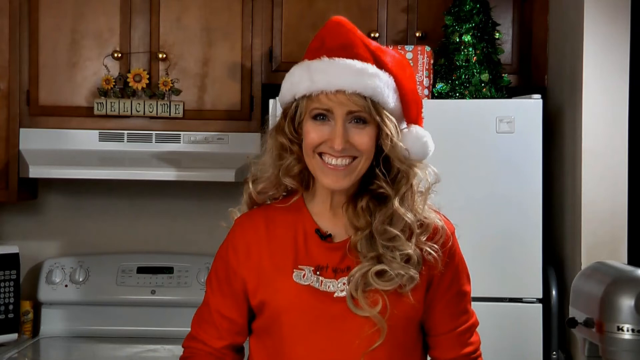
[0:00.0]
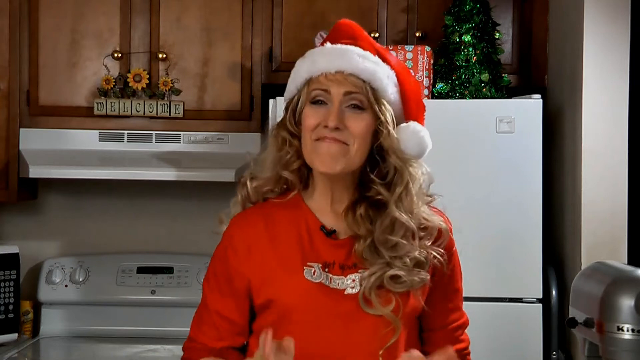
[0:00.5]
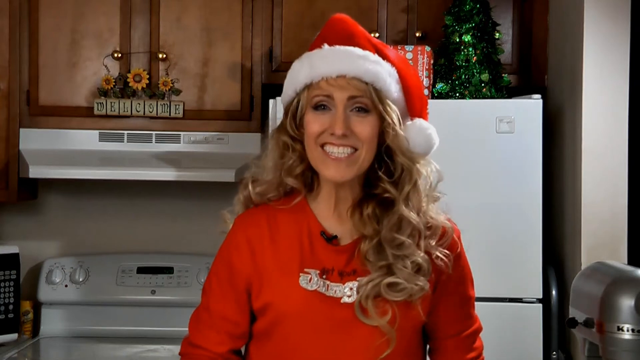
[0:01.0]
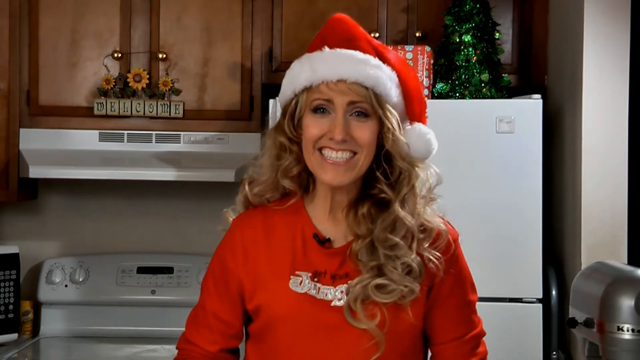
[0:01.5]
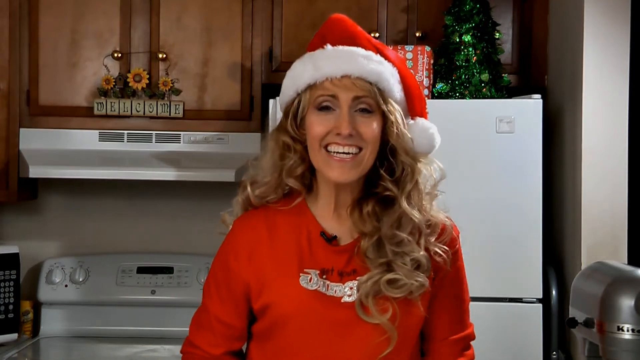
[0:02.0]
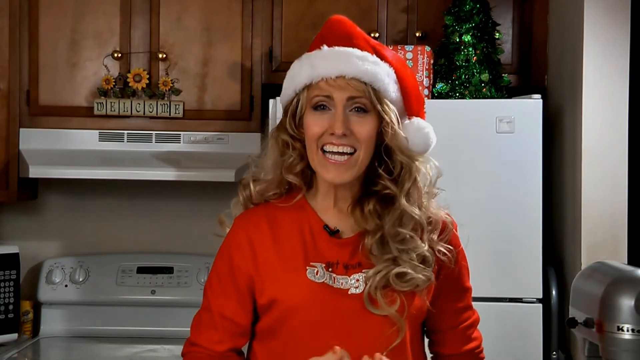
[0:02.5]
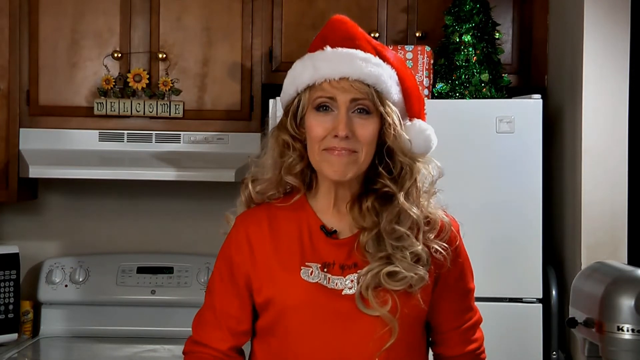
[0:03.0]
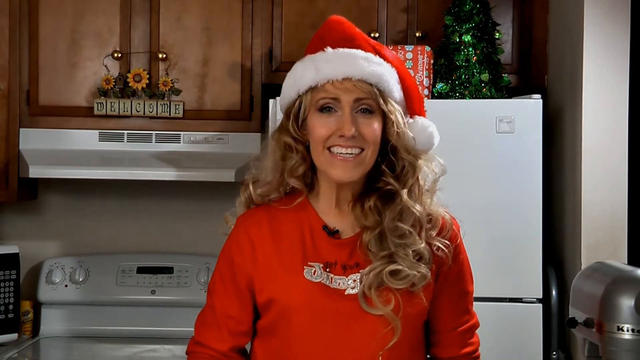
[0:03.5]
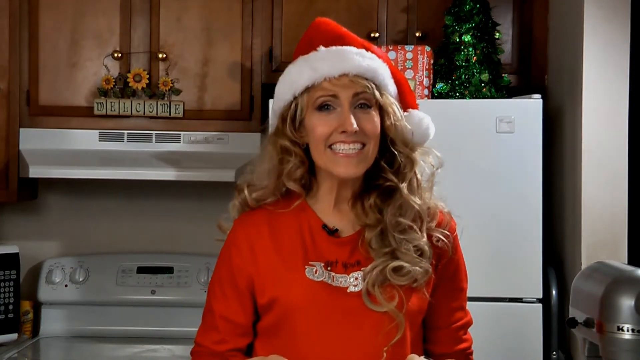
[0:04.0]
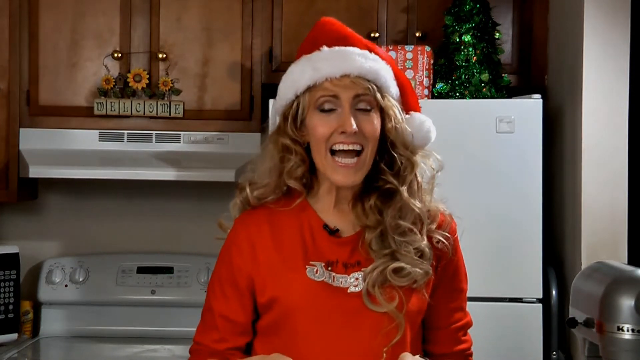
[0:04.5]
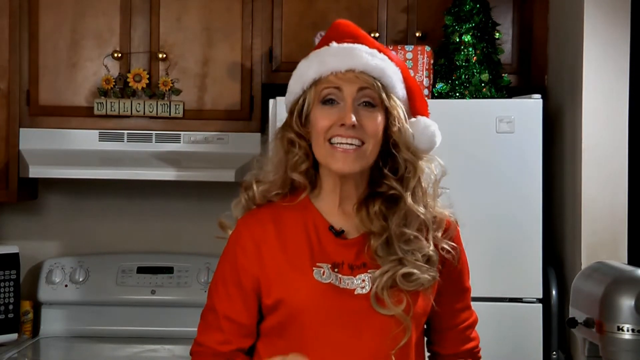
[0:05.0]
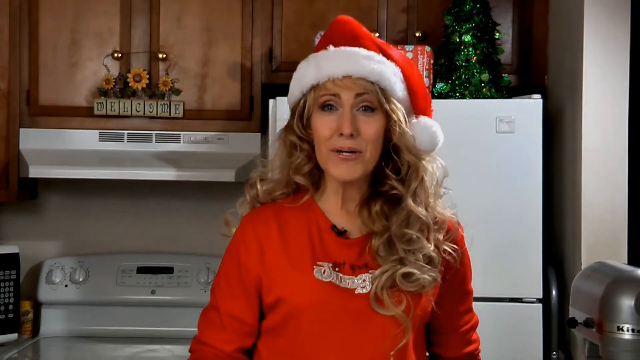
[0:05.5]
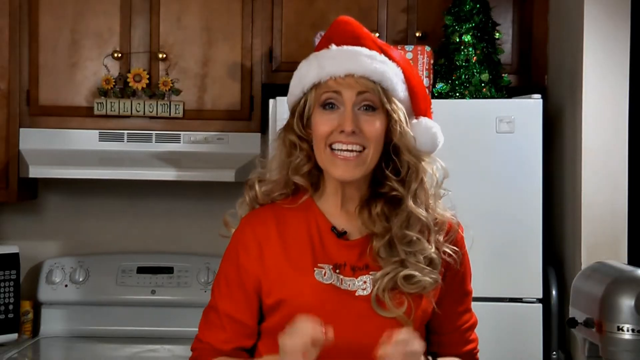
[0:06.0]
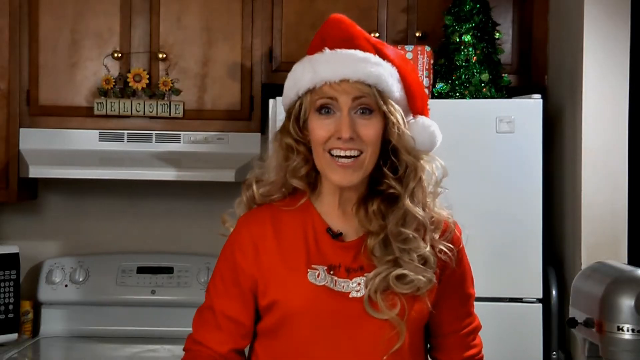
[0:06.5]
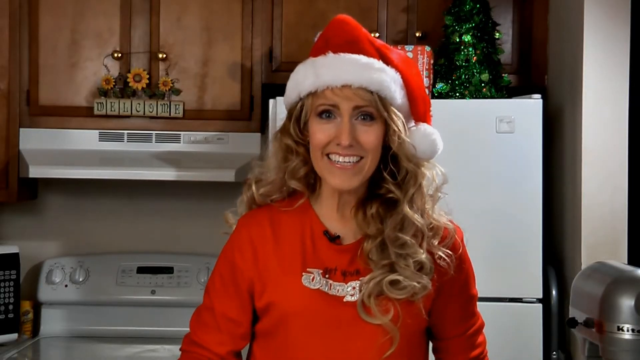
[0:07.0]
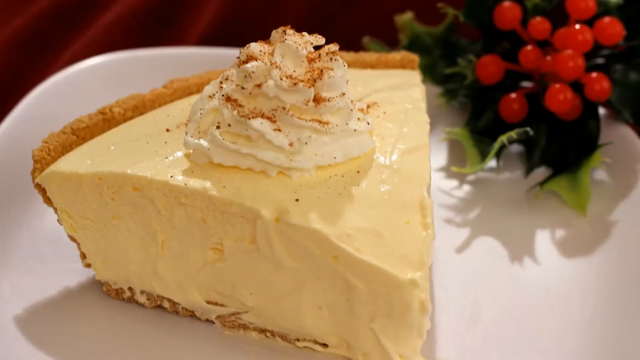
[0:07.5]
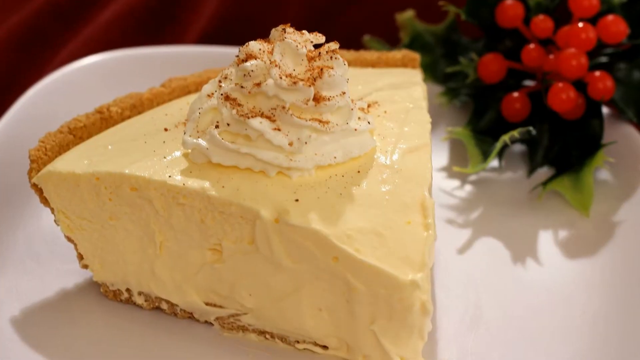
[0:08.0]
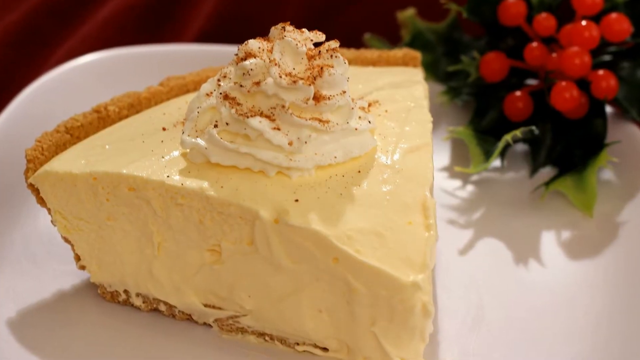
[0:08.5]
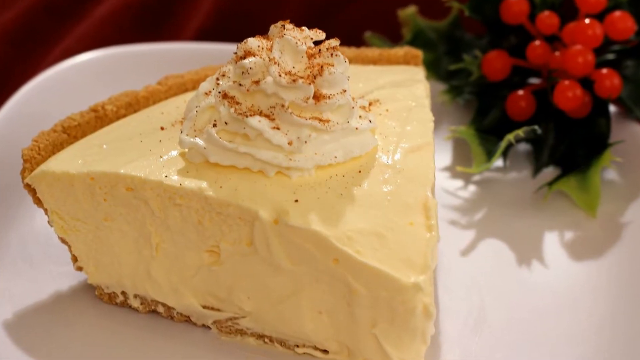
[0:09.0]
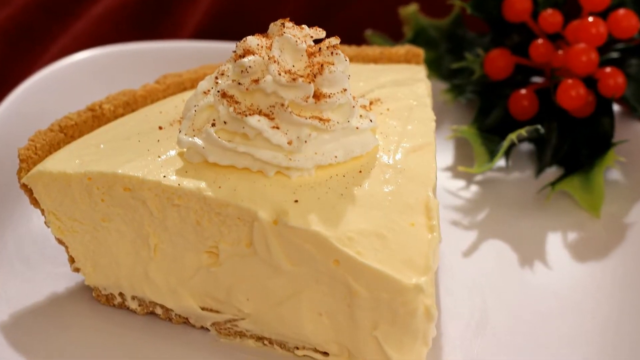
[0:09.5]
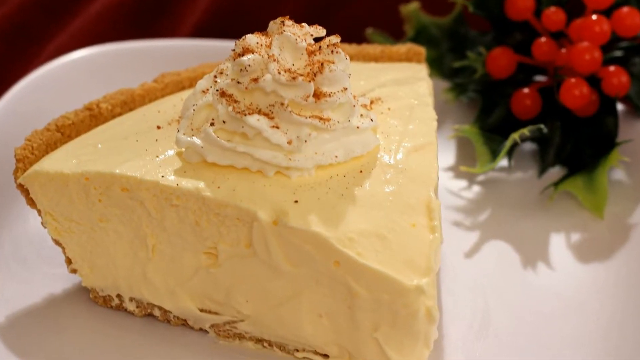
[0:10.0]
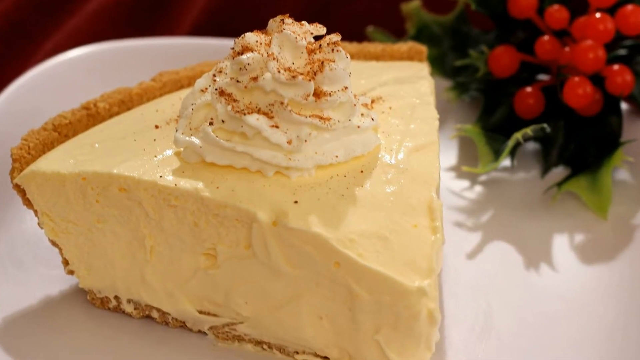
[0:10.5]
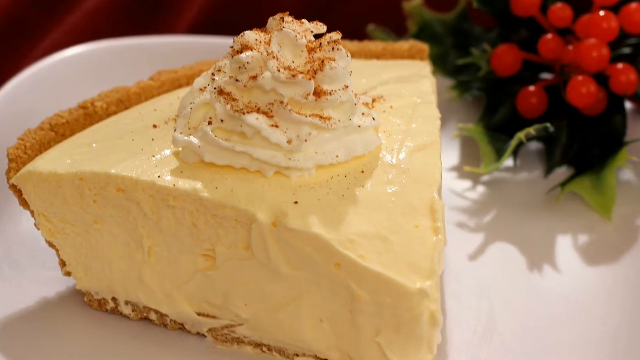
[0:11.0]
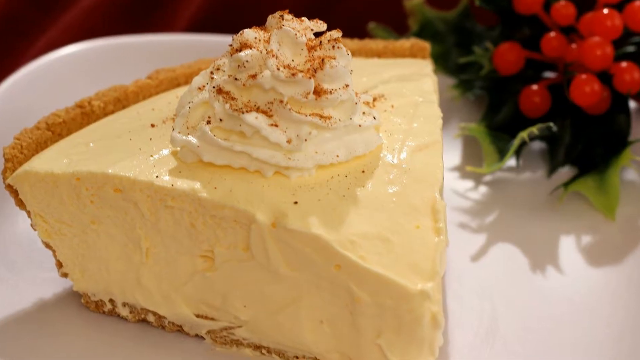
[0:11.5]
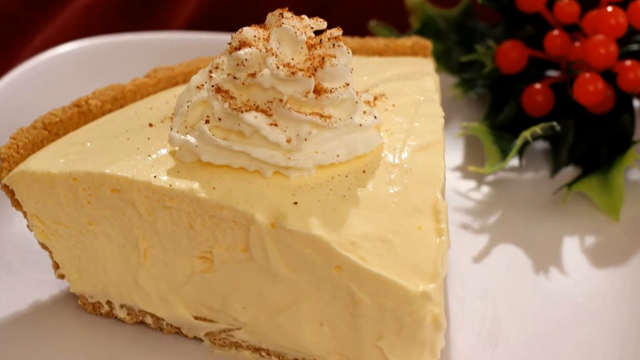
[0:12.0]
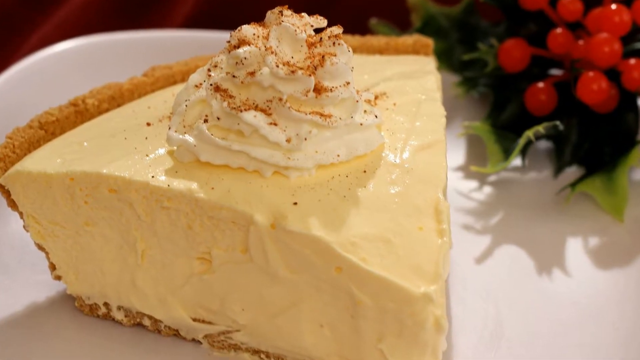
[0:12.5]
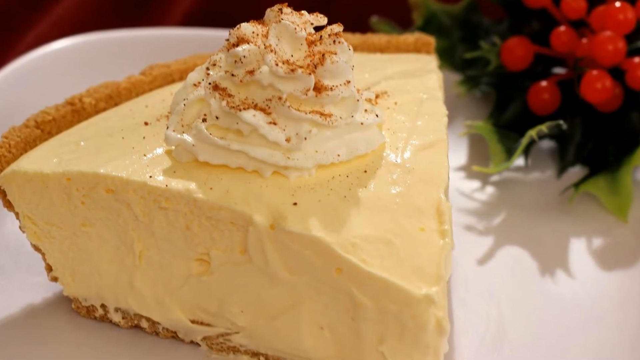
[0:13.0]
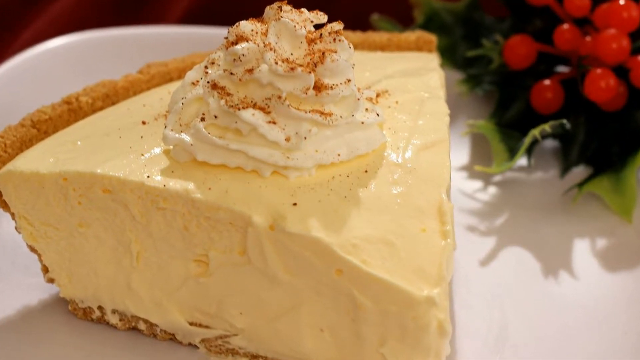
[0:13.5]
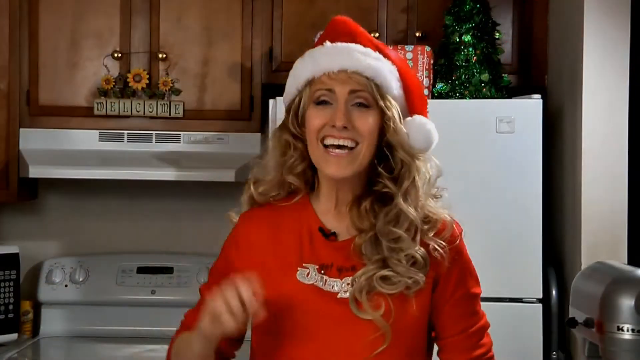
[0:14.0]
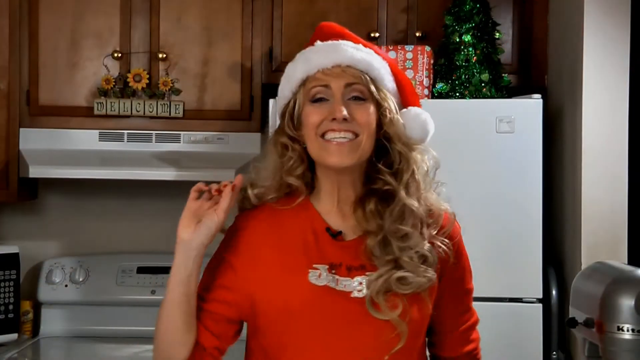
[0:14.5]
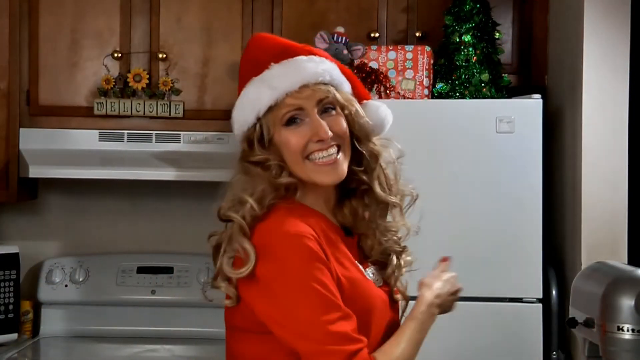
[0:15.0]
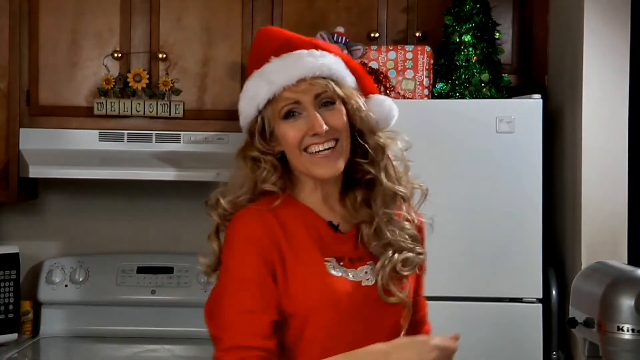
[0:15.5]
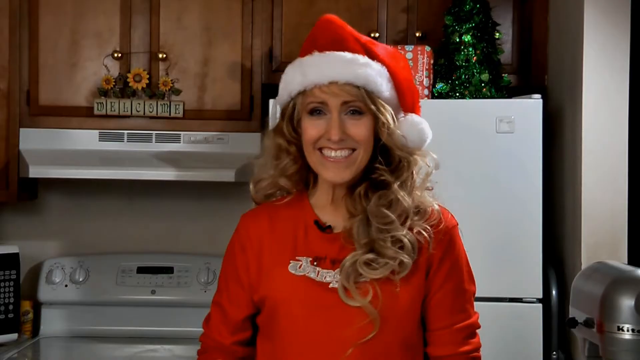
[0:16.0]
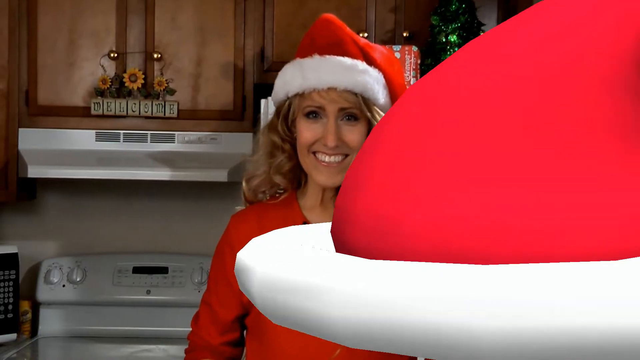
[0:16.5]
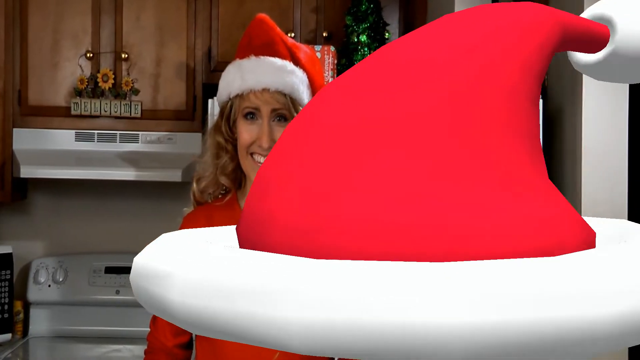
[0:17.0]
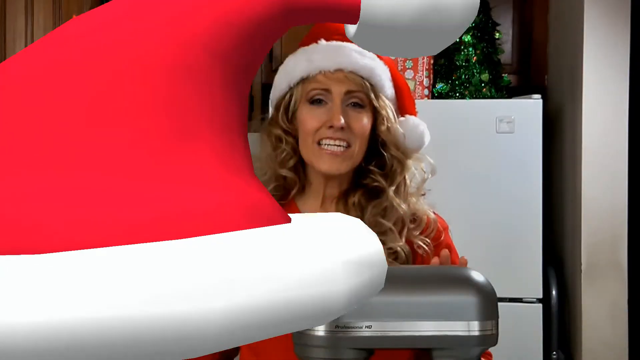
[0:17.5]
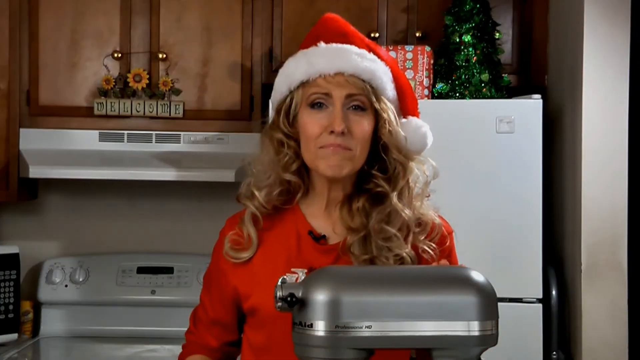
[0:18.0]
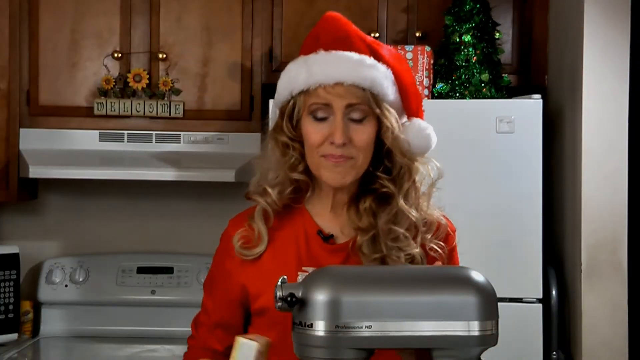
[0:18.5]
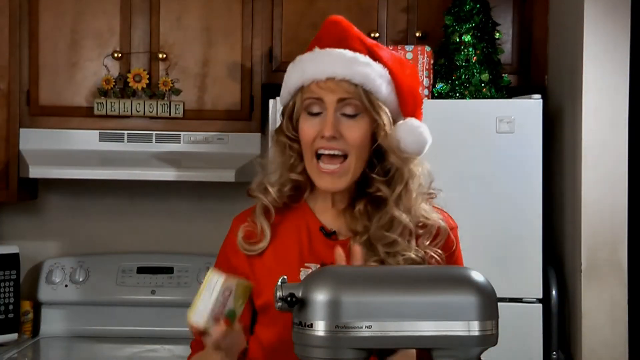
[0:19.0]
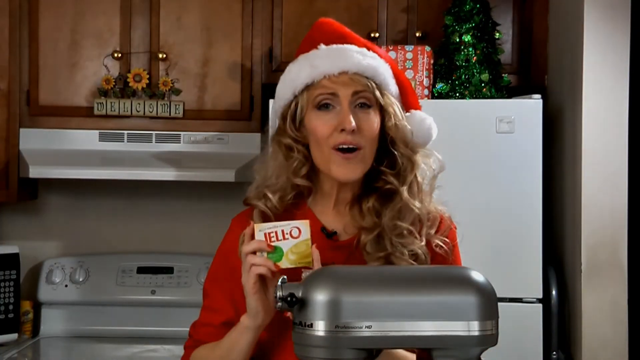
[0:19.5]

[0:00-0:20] A white woman with blonde hair wears a Christmas outfit: a Christmas hat and a Christmas shirt. In the back there is a white refrigerator with Christmas items on top of it. To the left of that are a stove and a cabinet, and a pie on a plate that the camera keeps zooming in on. The video then zooms out to the woman speaking, transitions to some type of Santa Claus hat, and then transitions to a picture of the woman holding a stick of Jell-O. The entire time she speaks, she smiles and seems happy and in good spirits. Her shirt has some words on it, possibly including "dining", but they are cut off by her hair.